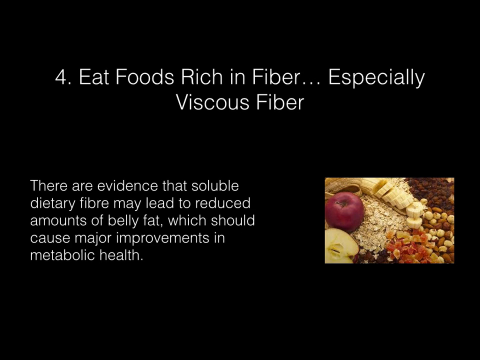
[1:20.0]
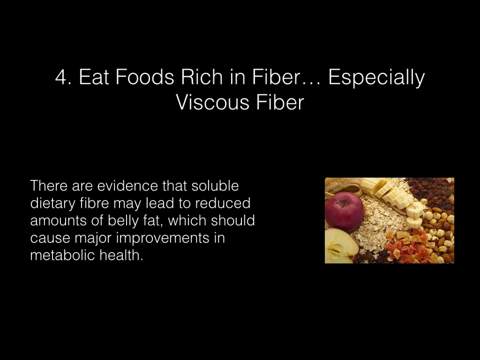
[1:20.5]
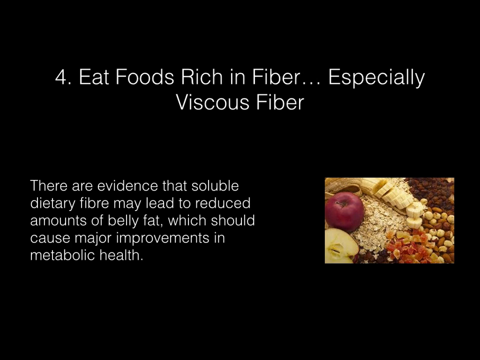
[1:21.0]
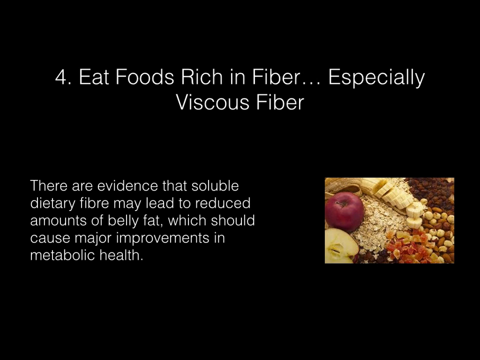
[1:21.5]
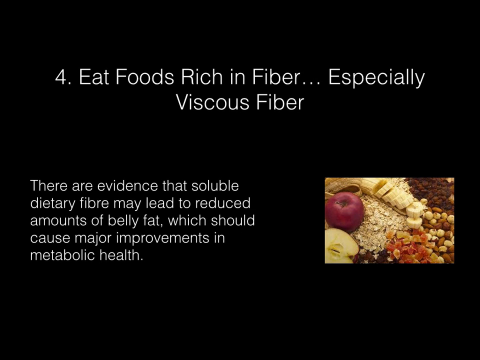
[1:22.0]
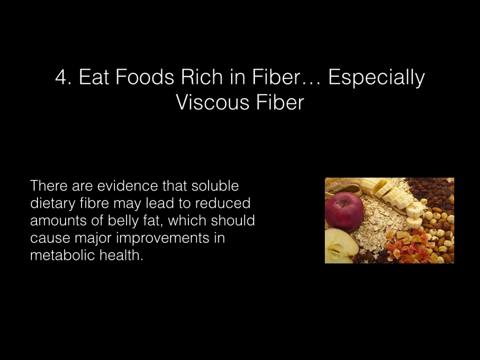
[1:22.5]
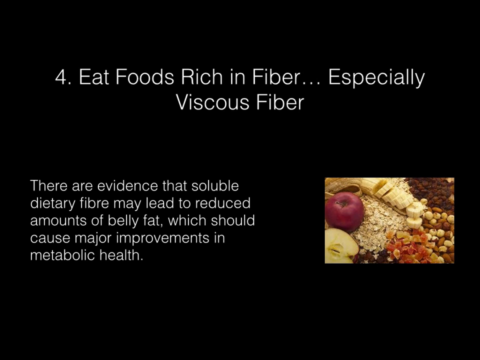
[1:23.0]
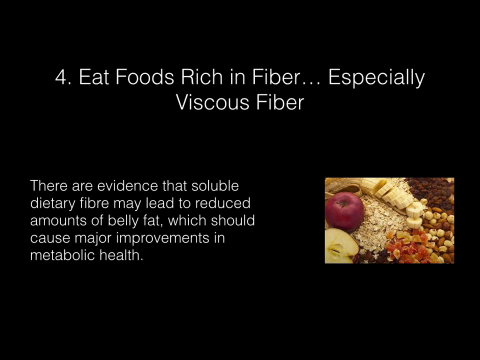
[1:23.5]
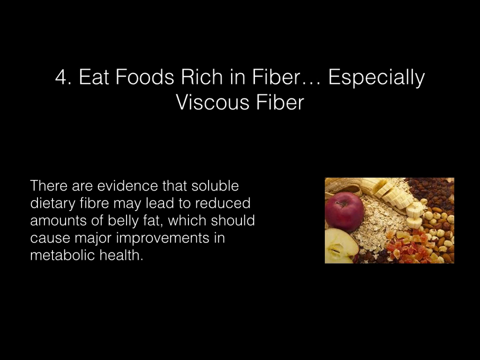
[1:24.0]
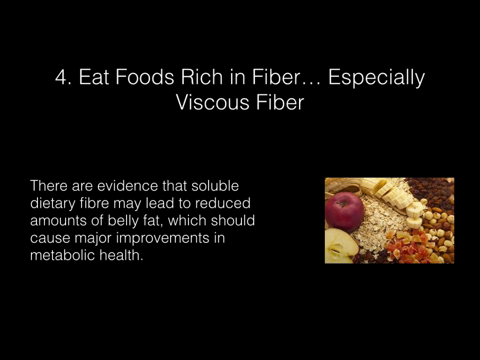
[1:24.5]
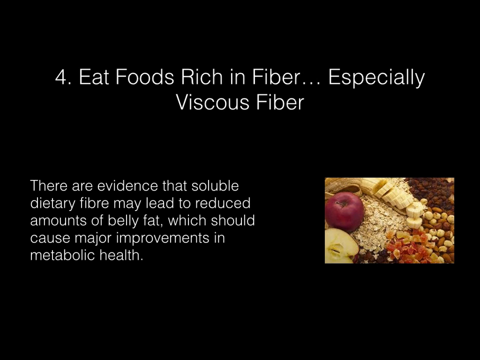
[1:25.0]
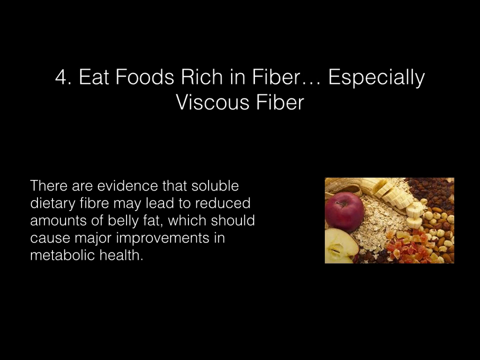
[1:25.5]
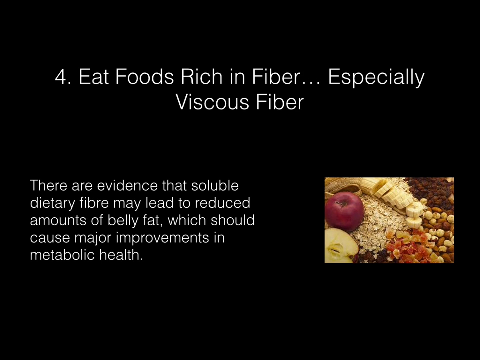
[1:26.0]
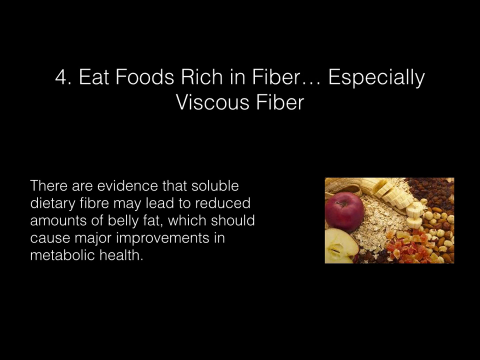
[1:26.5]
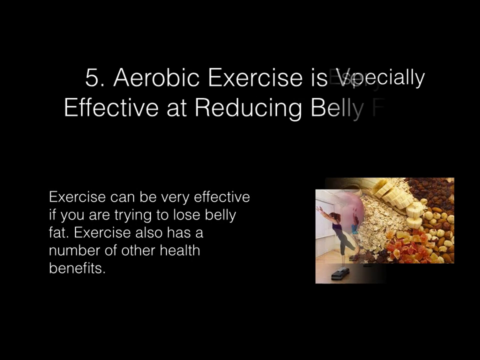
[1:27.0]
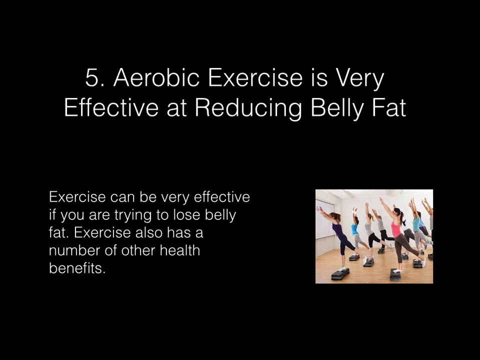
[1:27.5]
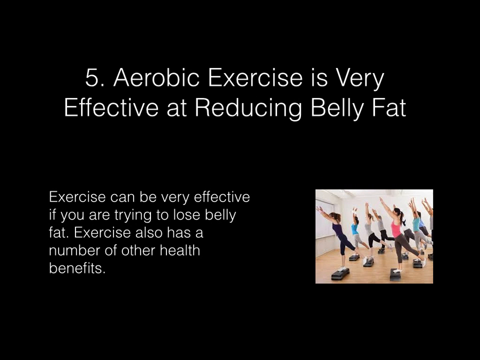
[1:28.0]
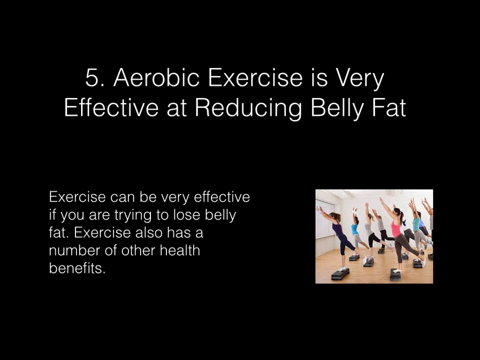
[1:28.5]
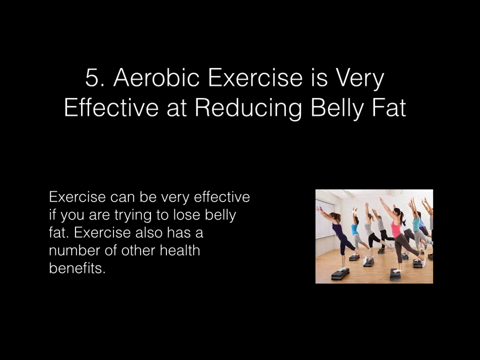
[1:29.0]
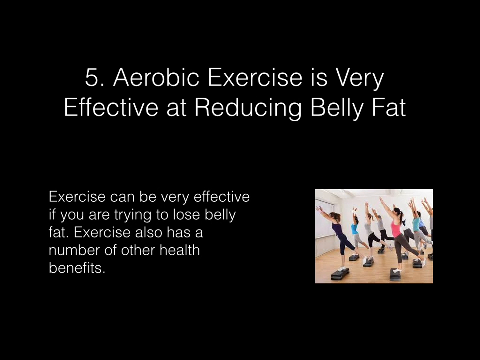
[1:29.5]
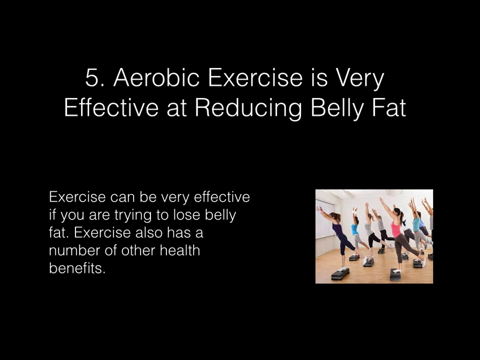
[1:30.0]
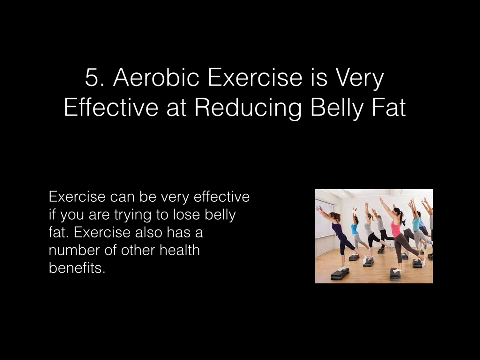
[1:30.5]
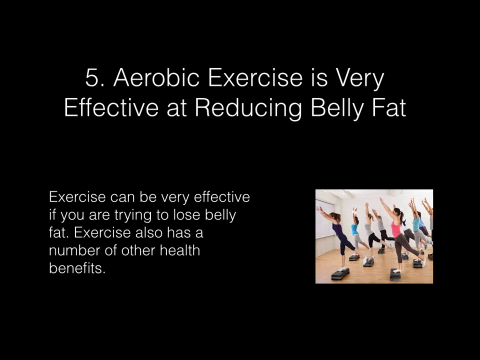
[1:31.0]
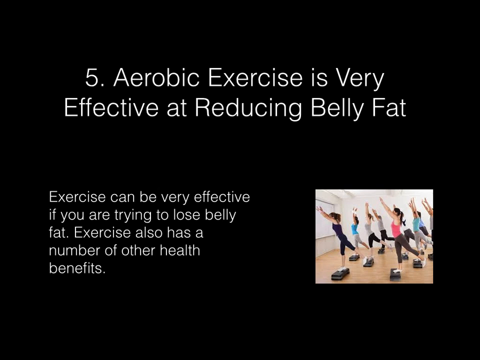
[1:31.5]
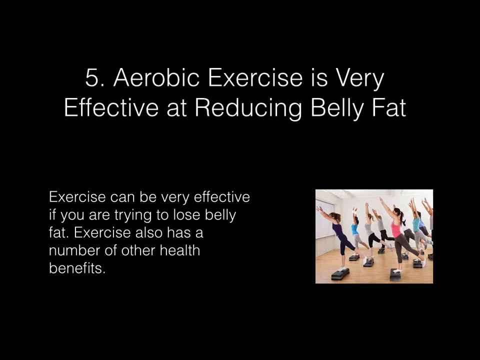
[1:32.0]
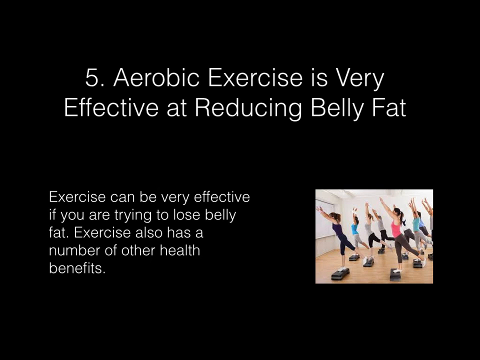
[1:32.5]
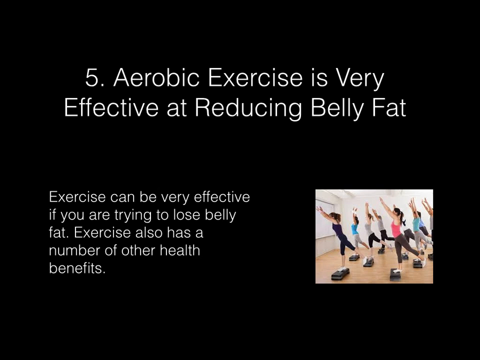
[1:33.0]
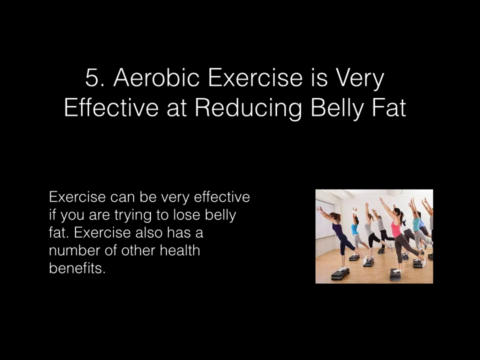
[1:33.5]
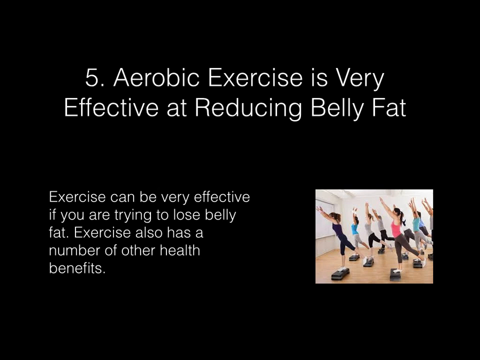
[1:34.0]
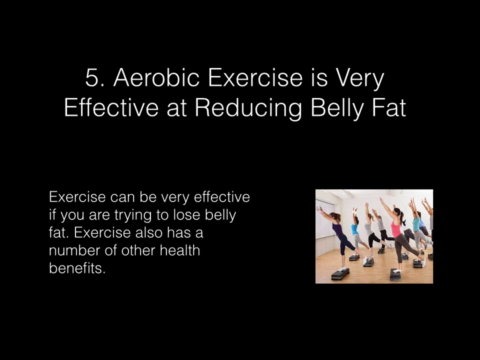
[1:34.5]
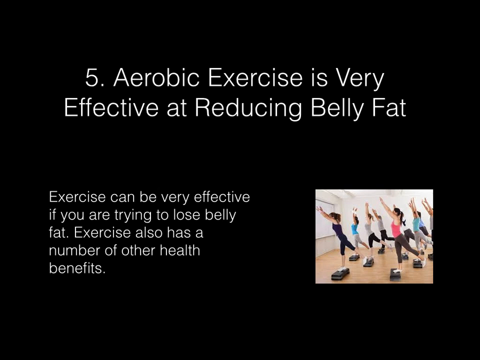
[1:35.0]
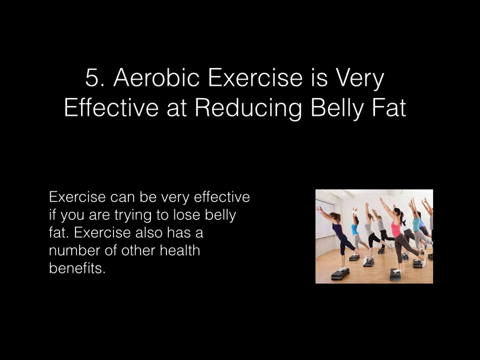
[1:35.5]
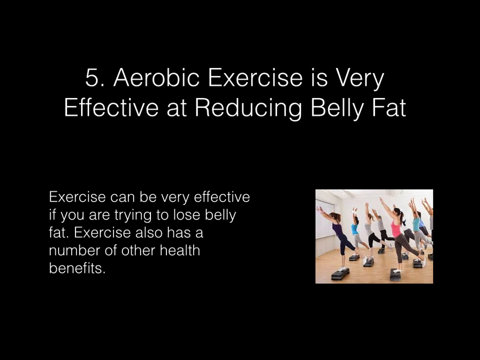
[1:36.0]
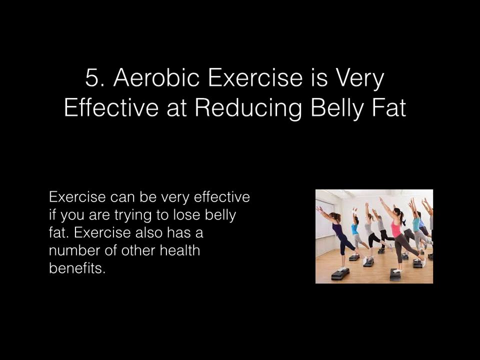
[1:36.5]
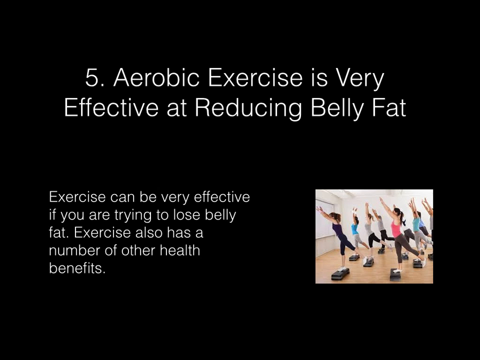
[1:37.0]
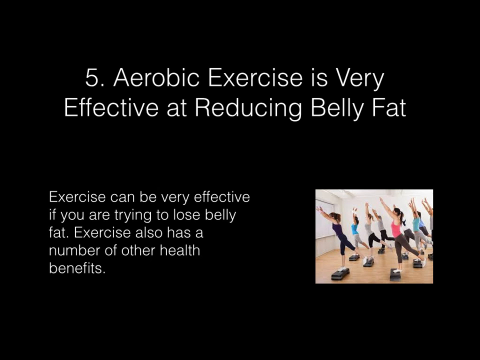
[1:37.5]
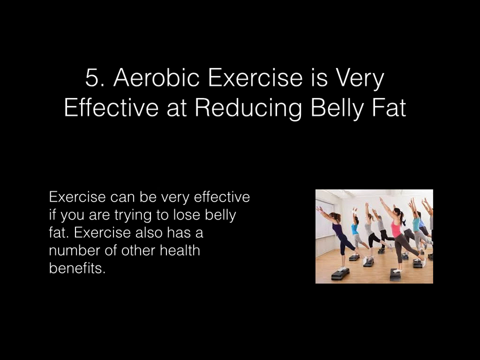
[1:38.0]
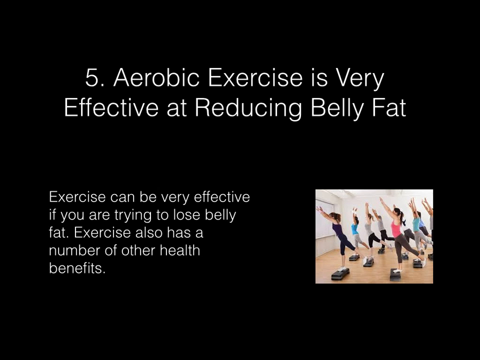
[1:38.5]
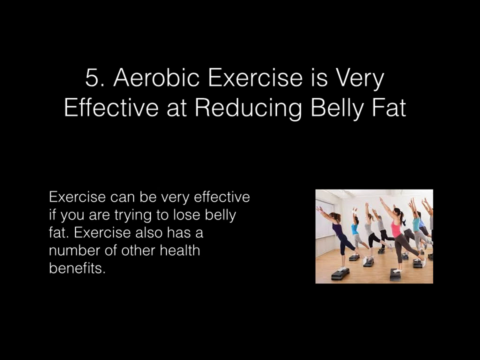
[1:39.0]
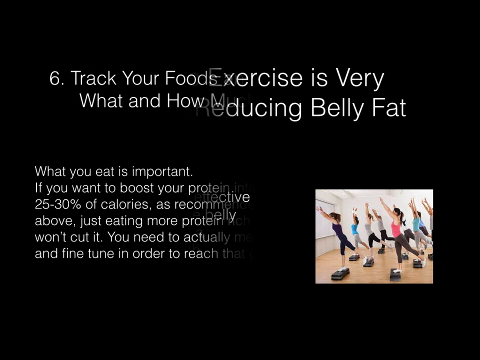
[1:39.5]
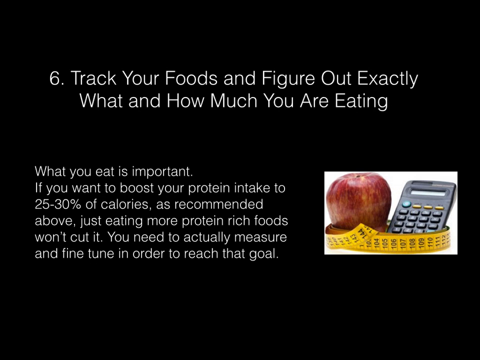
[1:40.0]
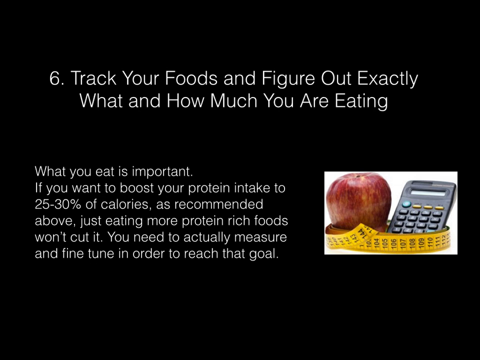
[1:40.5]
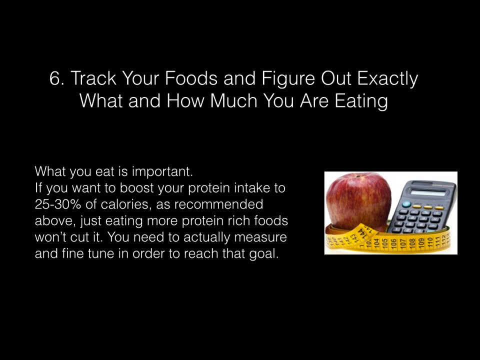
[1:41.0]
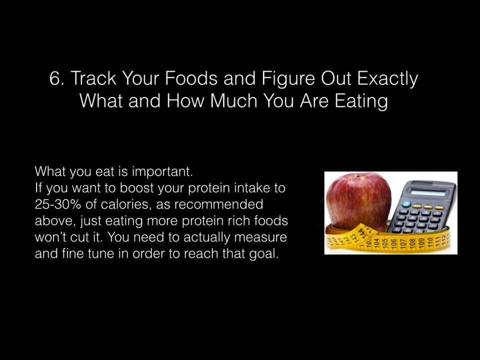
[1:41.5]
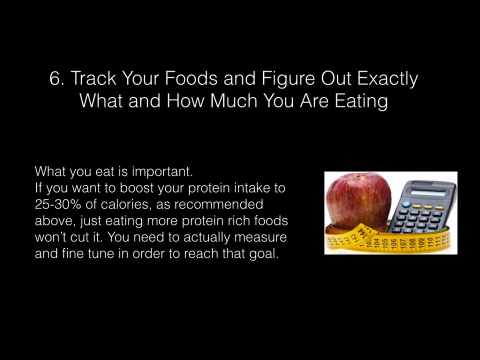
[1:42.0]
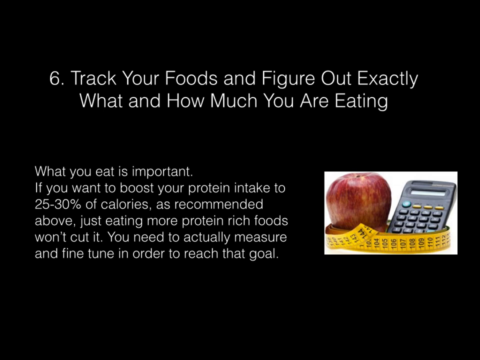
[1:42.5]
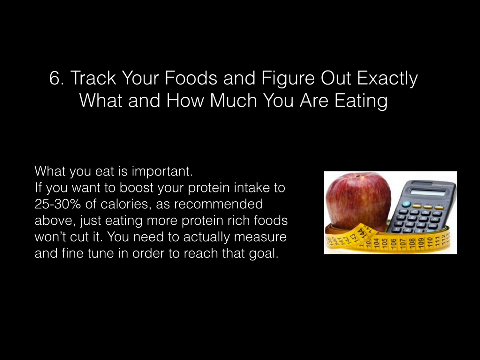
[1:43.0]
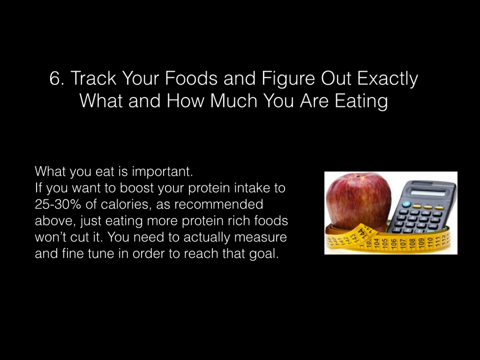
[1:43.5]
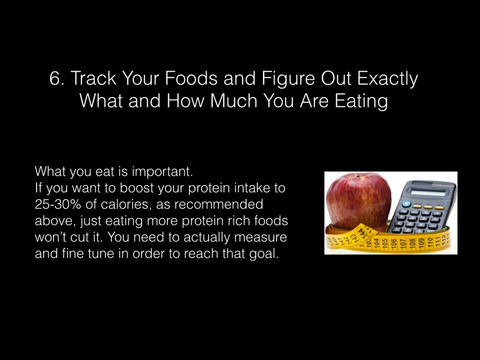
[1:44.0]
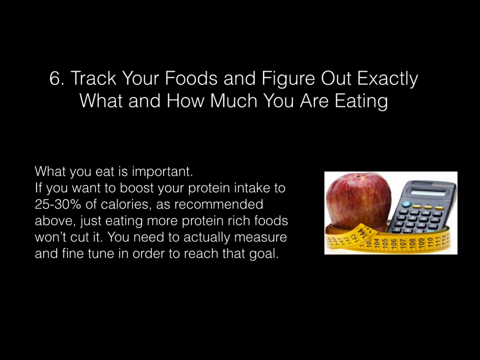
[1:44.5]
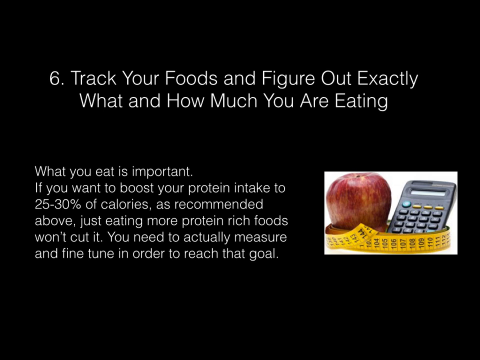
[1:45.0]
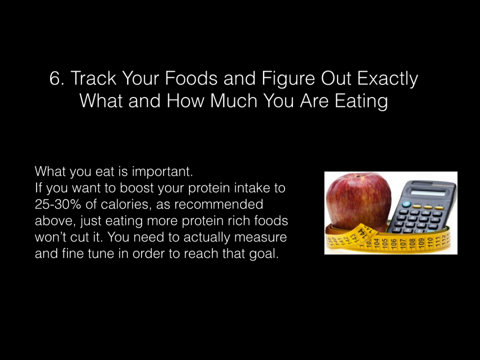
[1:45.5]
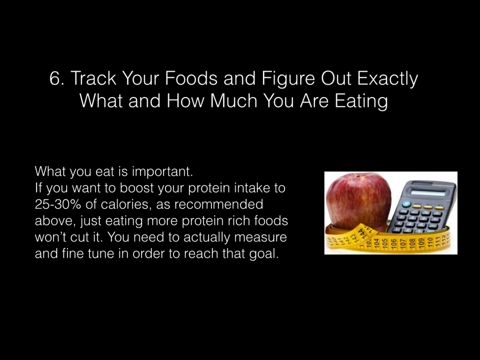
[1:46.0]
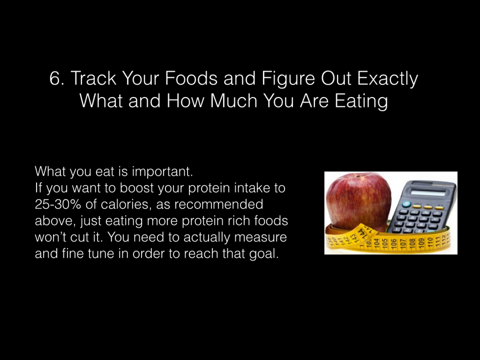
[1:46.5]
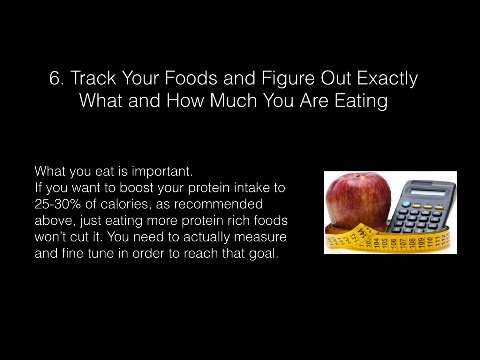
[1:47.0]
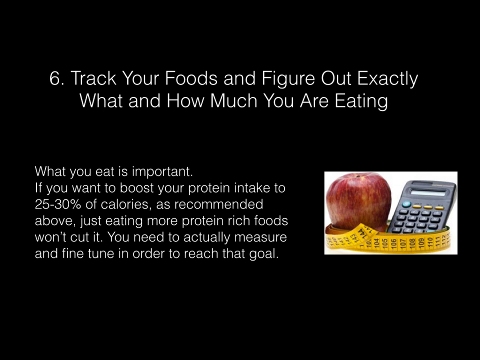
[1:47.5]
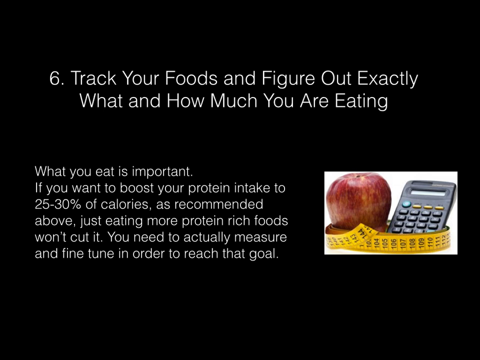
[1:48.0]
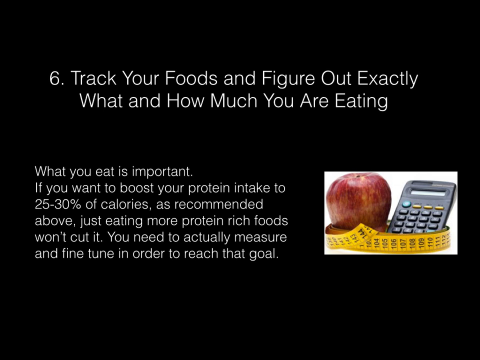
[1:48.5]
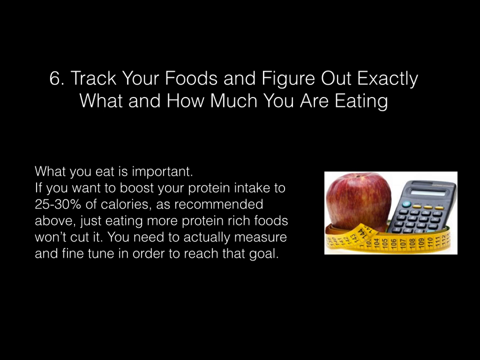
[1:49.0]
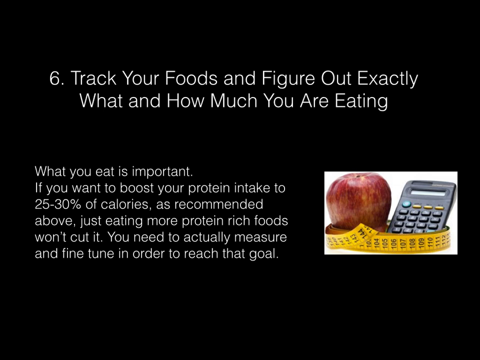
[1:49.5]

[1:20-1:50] This health and fitness video is full of slideshow images about losing weight. Slide four reads "eat foods rich in fiber, especially viscous fiber," and on the lower left "there are evidence that soluble dietary fiber may lead to reduced amounts of belly fat, which should cause major improvements in metabolic health." On the right is a picture of healthy food including oats, an apple, a sliced apple, a sliced banana and various other items. Slide five follows, reading "aerobic exercise is very effective at reducing belly fat," and on the lower left "exercise can be very effective if you are trying to lose belly fat. exercise also has a number of other health benefits." On the right is a room full of women doing a step up exercise; all of them stand on the step up with their right foot, their left foot behind them and their hands reaching forward.